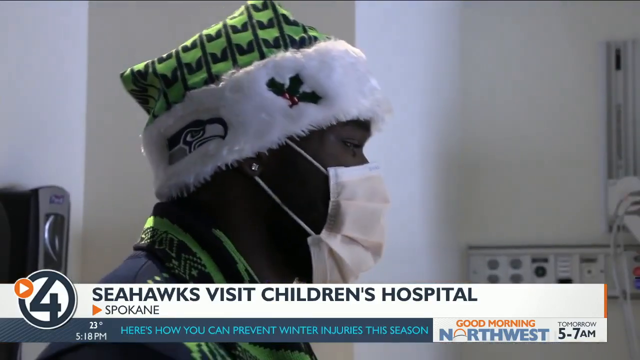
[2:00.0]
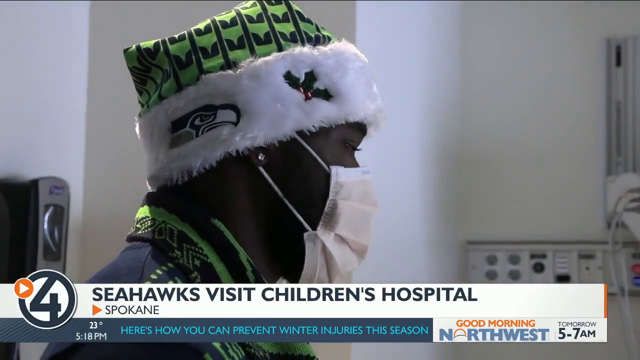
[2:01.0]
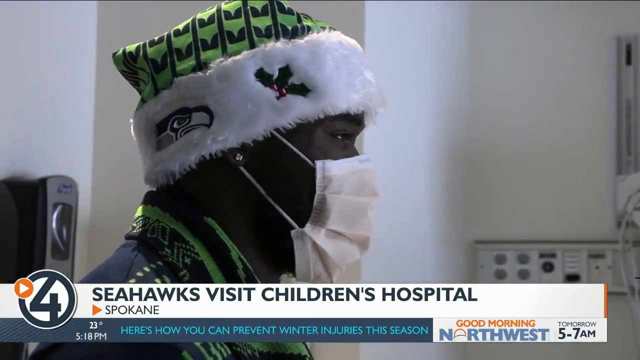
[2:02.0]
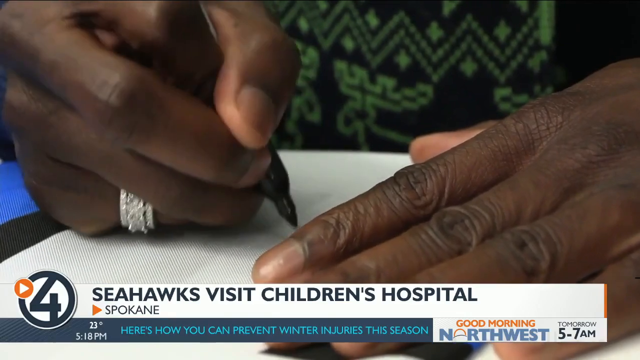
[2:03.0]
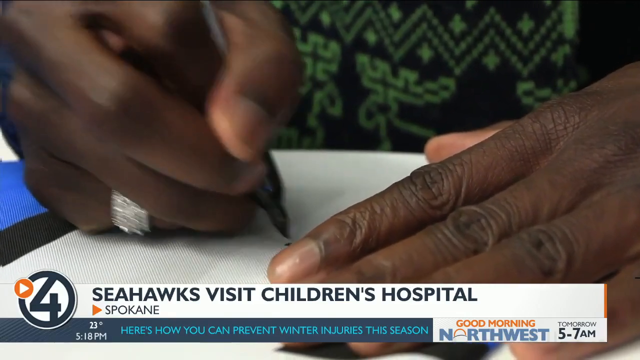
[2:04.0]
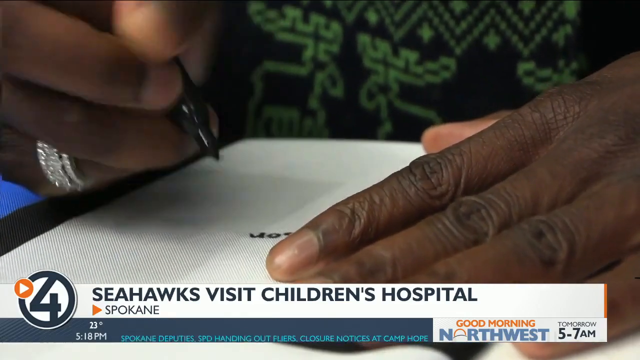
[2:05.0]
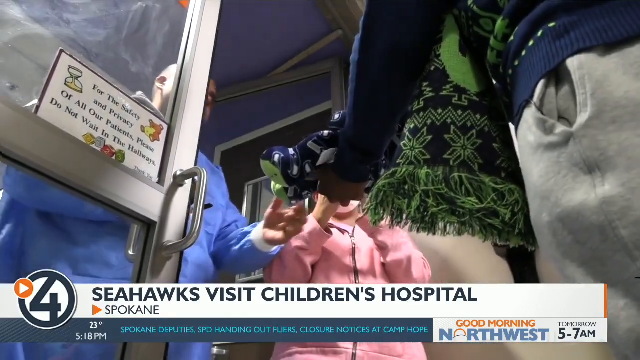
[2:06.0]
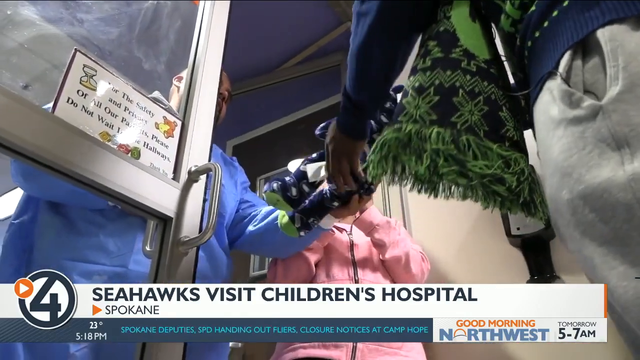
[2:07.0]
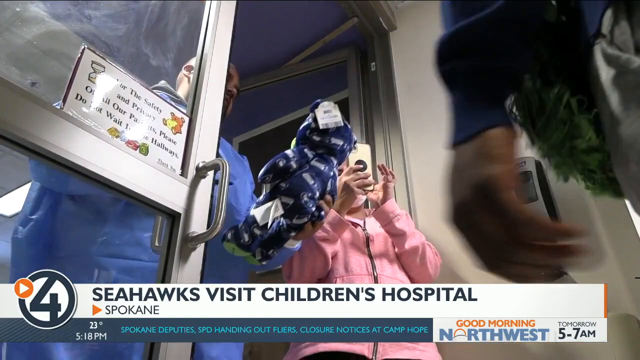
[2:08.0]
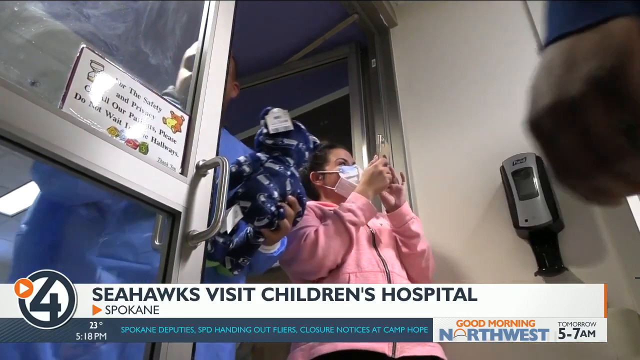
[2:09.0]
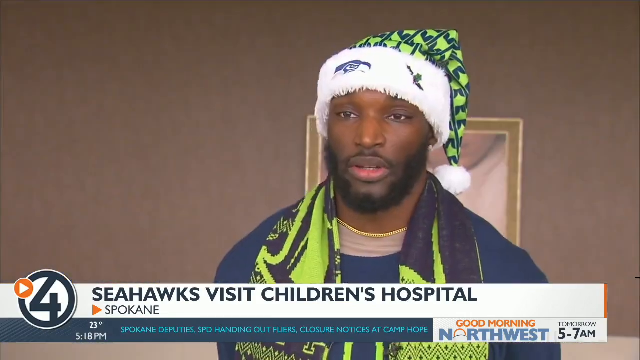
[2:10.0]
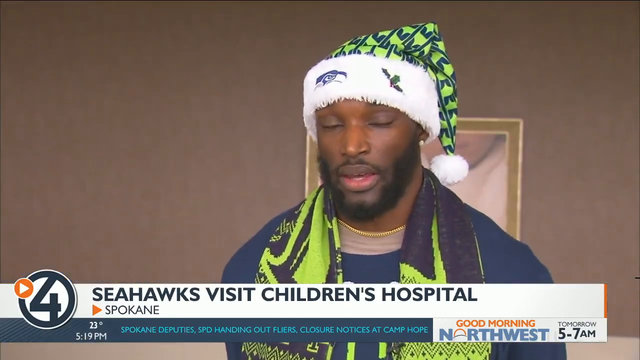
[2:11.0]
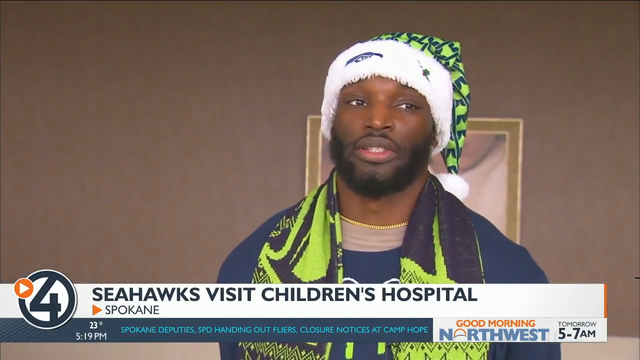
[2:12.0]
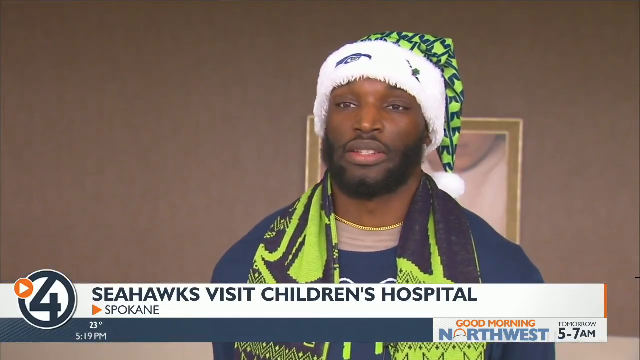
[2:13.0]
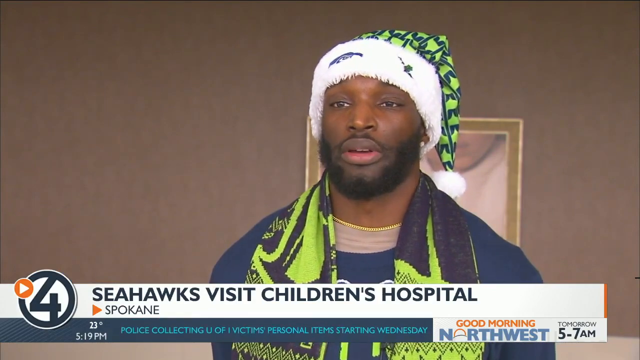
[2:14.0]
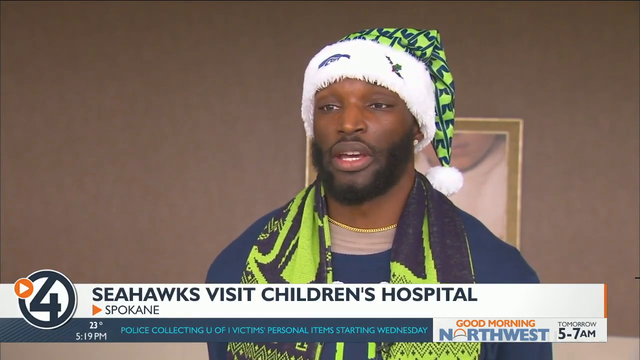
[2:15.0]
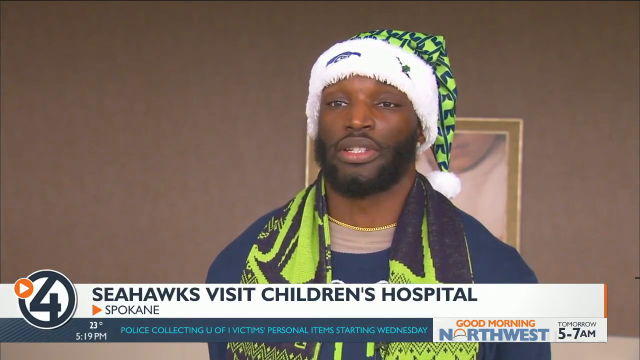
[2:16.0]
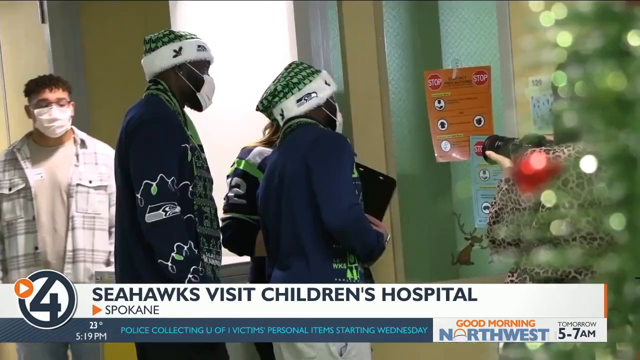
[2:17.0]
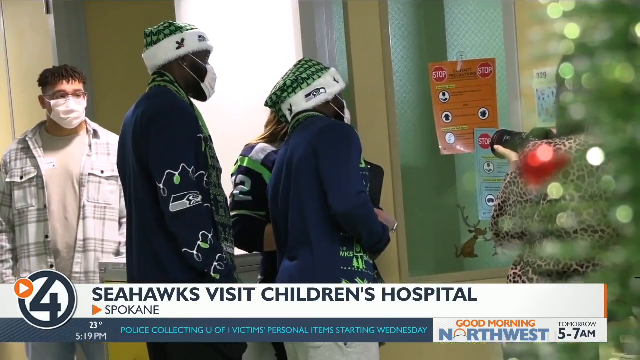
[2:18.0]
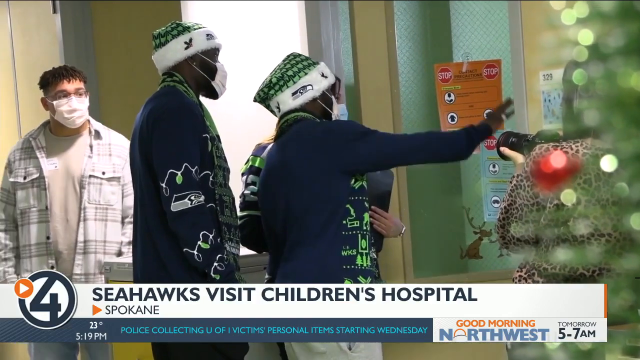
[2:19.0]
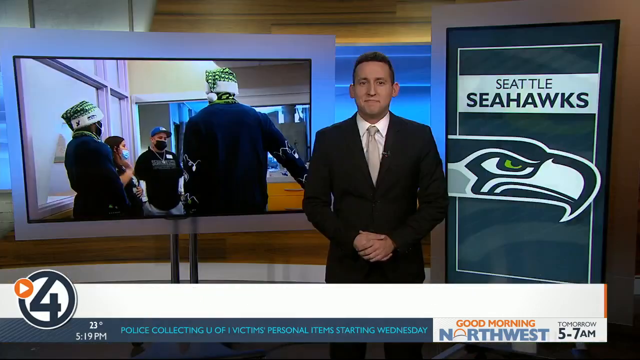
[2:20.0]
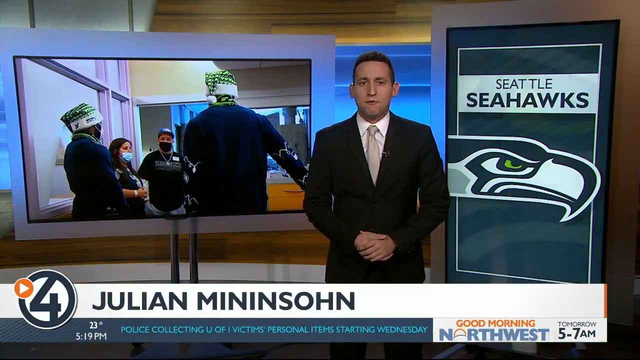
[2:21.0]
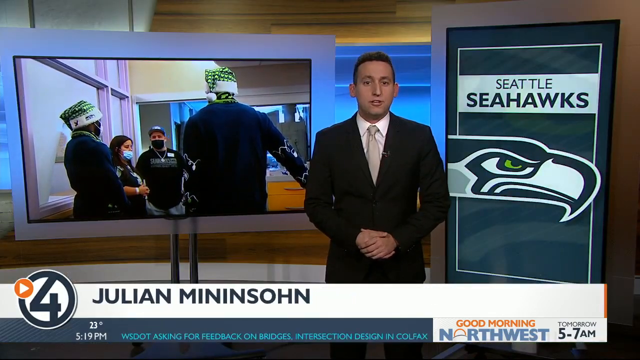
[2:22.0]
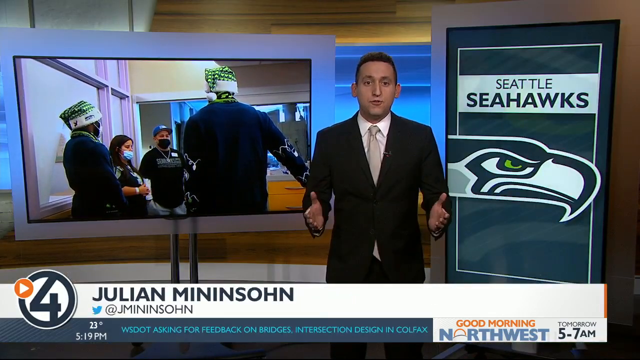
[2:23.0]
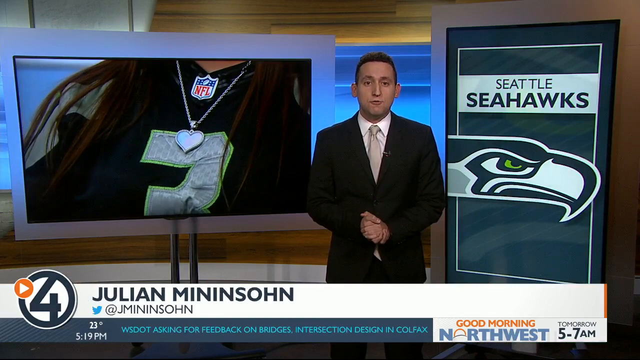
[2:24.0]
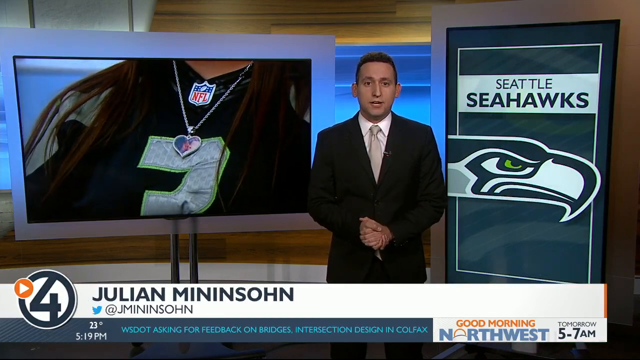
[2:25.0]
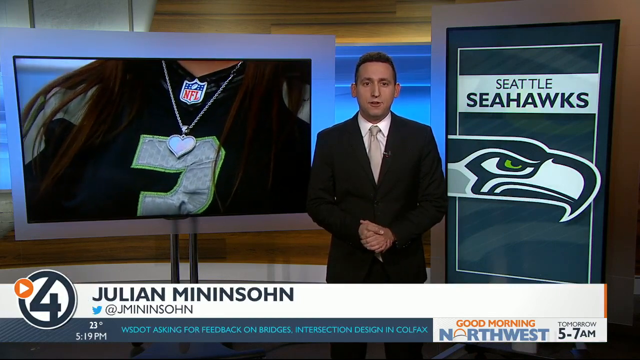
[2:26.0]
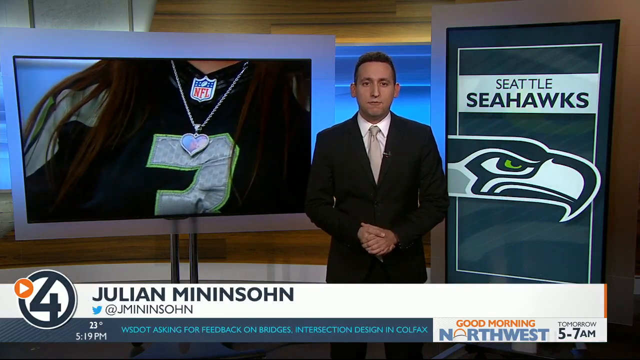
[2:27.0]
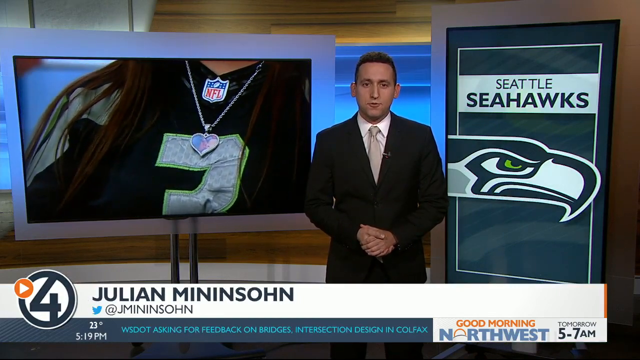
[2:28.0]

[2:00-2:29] The players are shown once again in the children's hospital: two players along with a couple of other visitors. A player is shown signing or possibly autographing something for someone in the hospital and presenting a gift, presumably for one of the patients. One of the players is again interviewed. The players are then shown looking into an apparent hospital room and waving. A Christmas tree is in the foreground, suggesting the visit took place around Christmas. The video ends with Julian Mininsohn speaking while some of the previously shown footage plays in the background, on Channel 4 from Spokane, Washington.